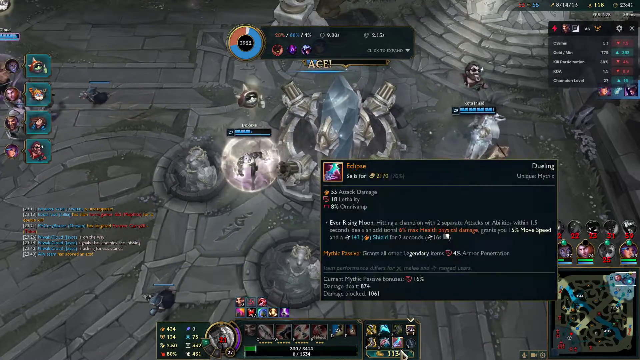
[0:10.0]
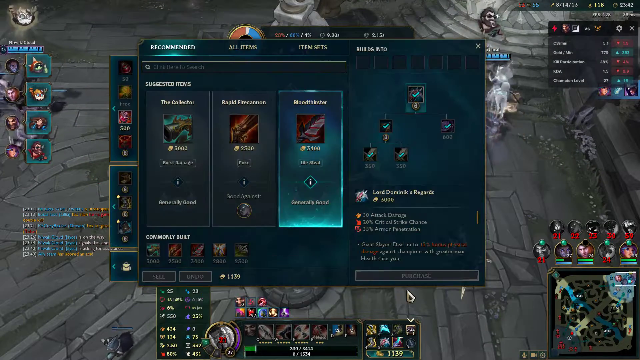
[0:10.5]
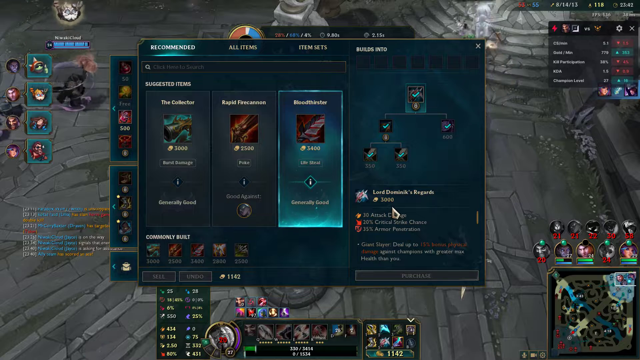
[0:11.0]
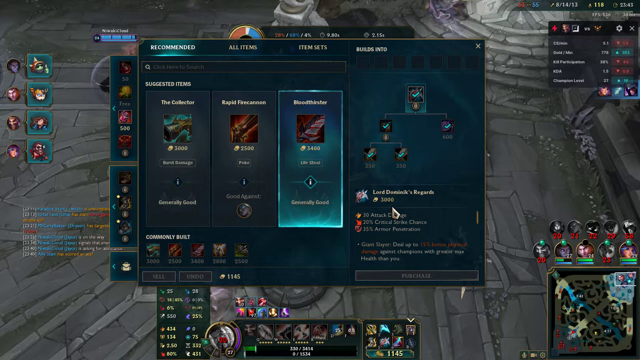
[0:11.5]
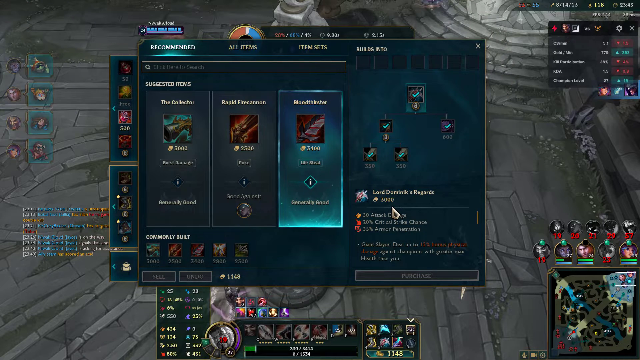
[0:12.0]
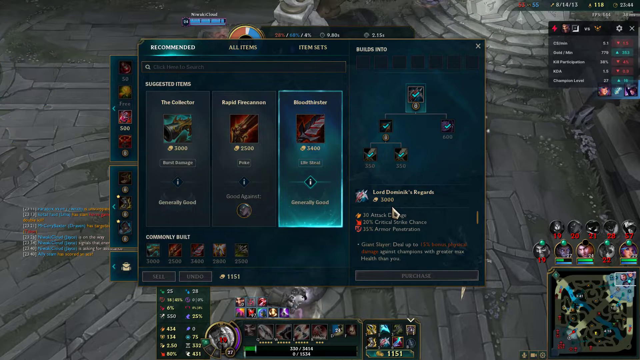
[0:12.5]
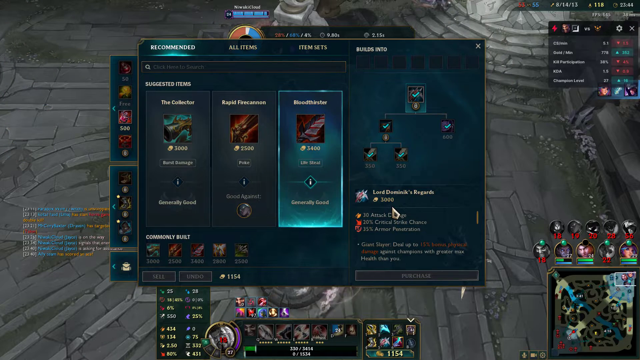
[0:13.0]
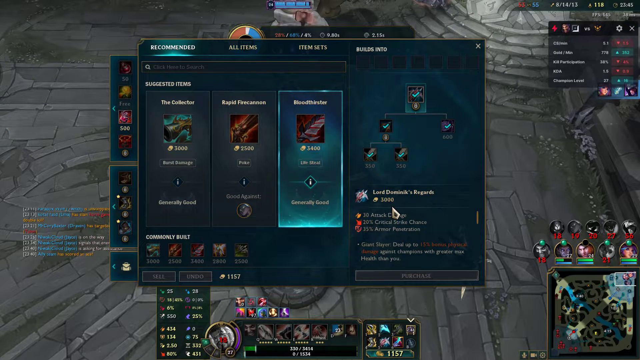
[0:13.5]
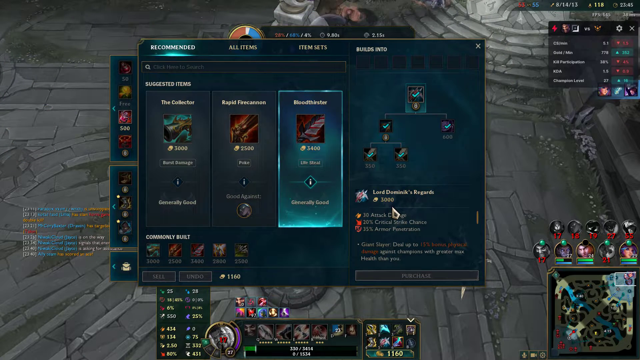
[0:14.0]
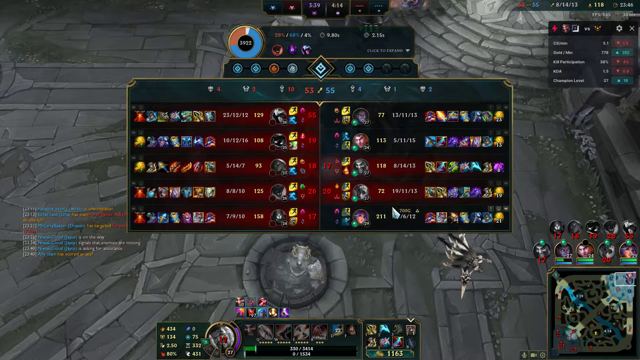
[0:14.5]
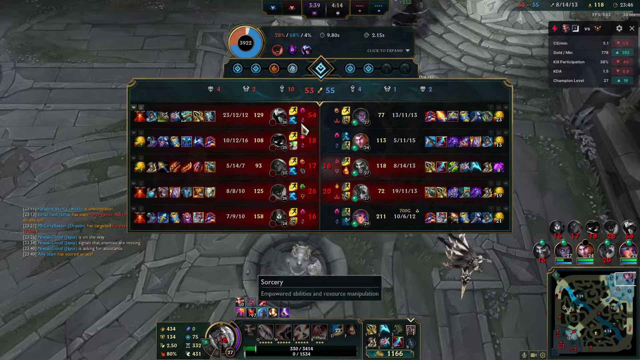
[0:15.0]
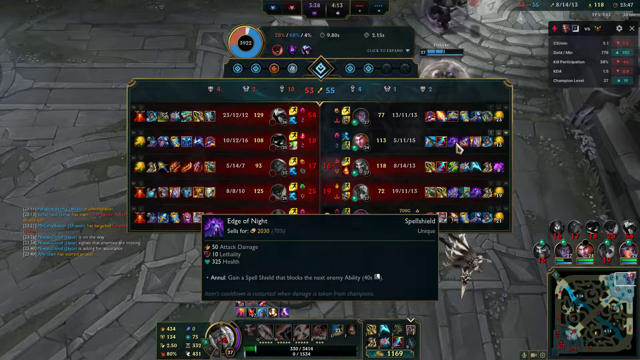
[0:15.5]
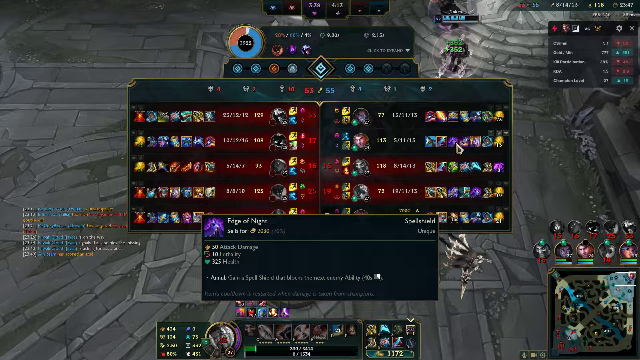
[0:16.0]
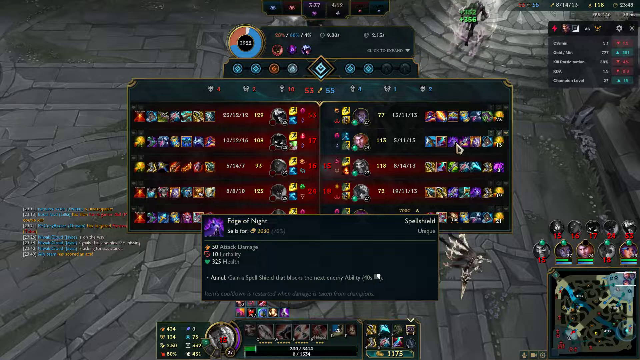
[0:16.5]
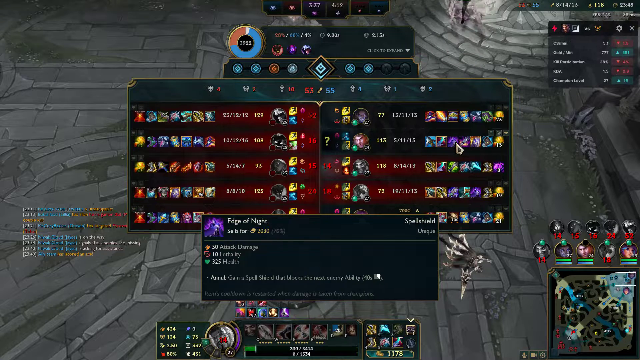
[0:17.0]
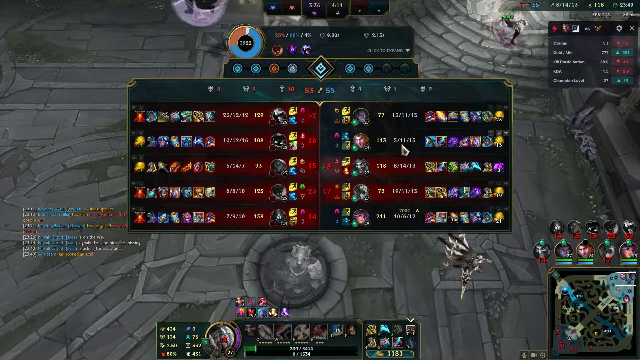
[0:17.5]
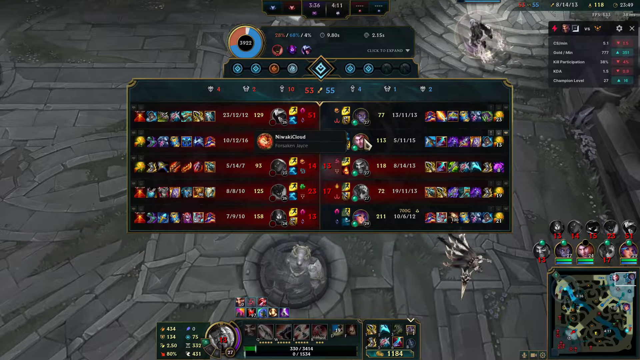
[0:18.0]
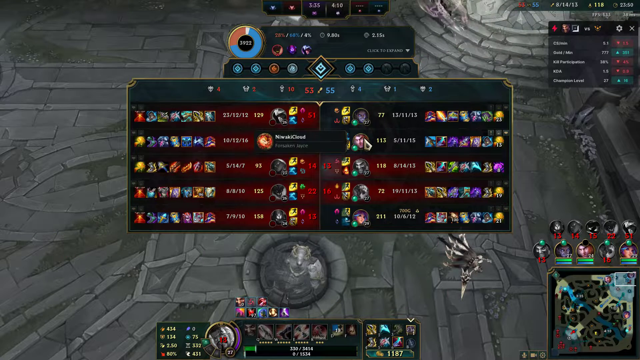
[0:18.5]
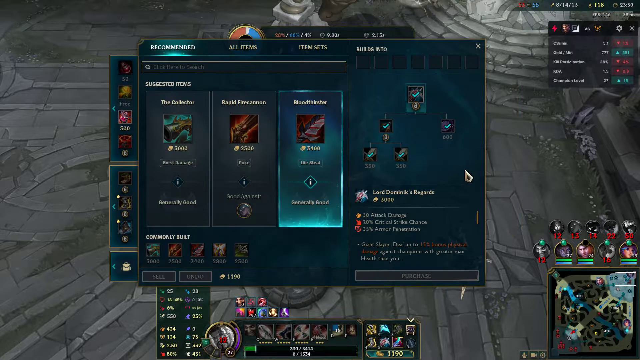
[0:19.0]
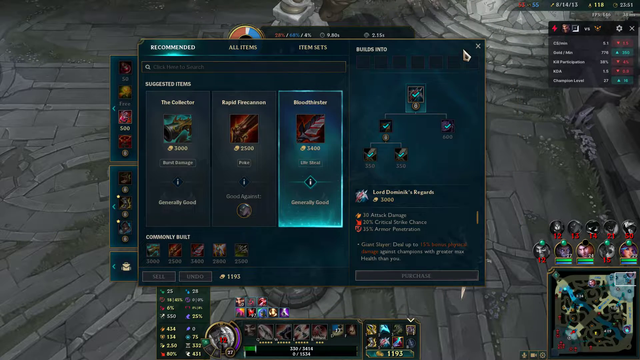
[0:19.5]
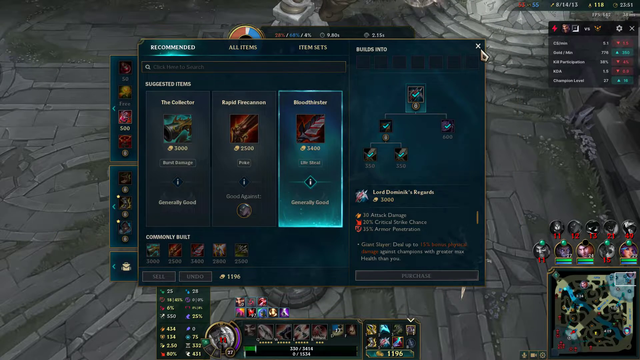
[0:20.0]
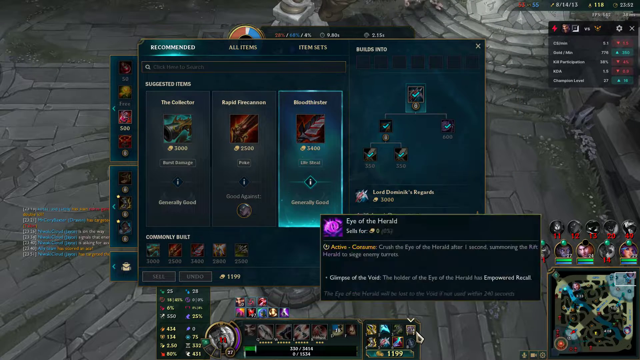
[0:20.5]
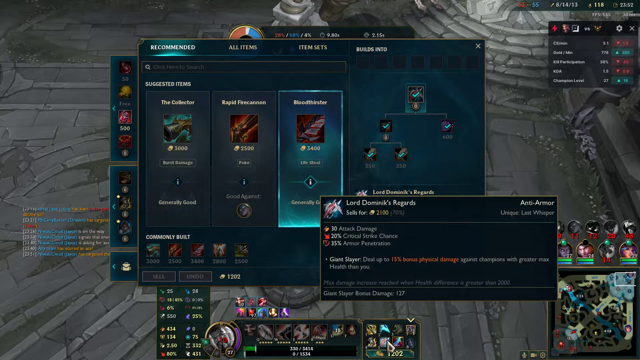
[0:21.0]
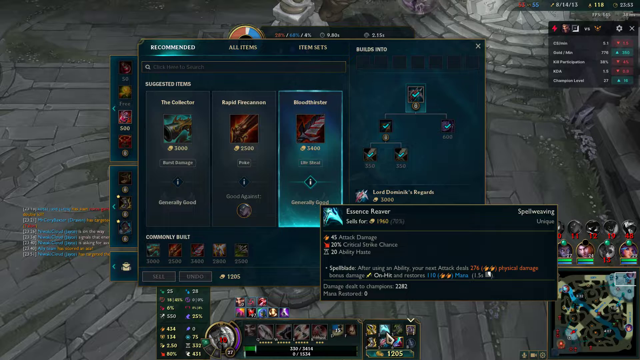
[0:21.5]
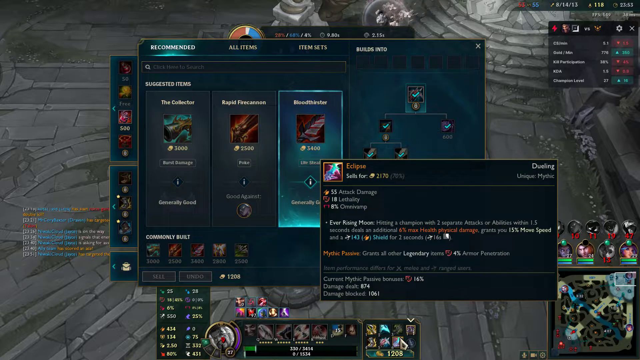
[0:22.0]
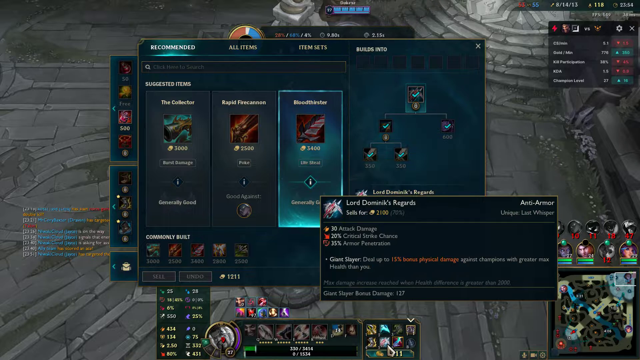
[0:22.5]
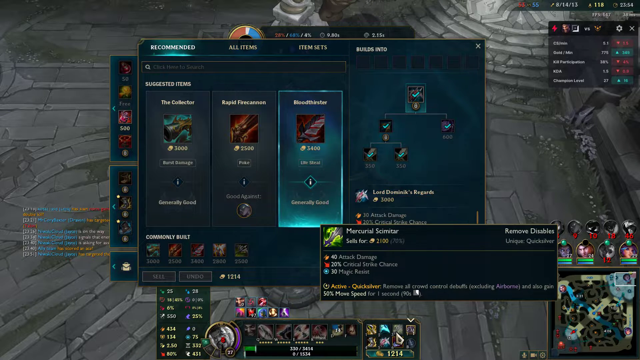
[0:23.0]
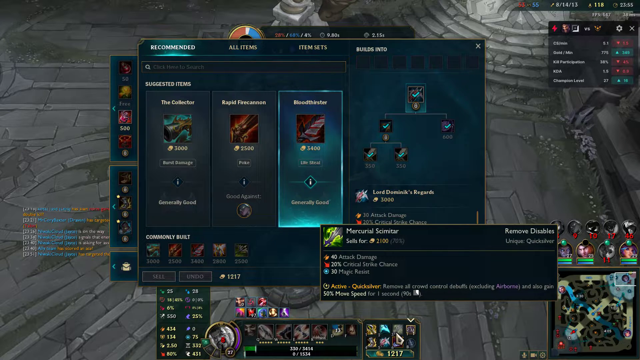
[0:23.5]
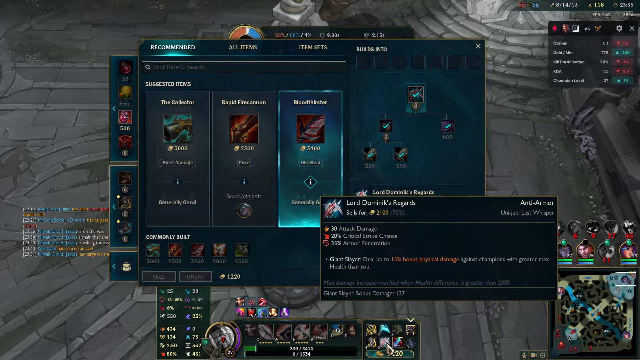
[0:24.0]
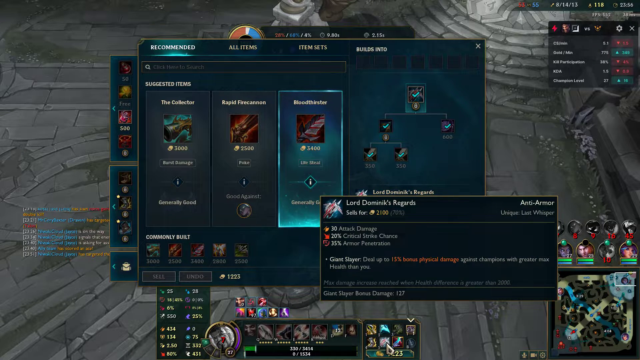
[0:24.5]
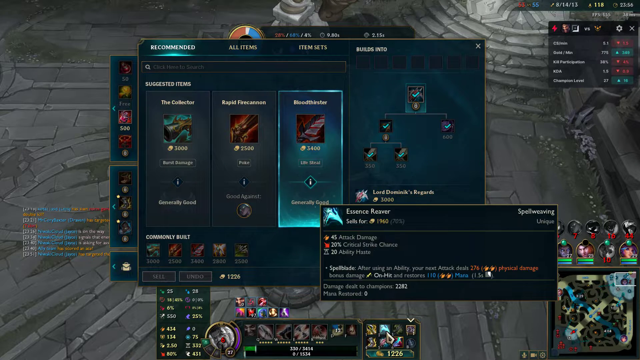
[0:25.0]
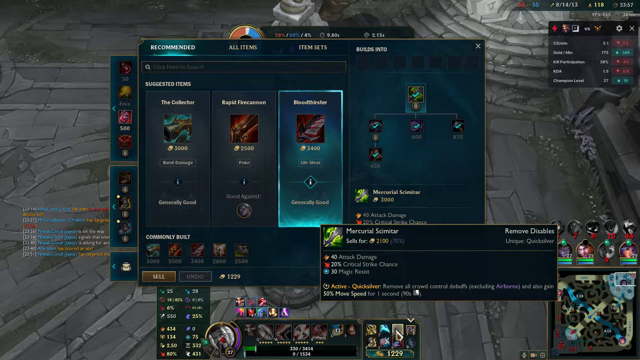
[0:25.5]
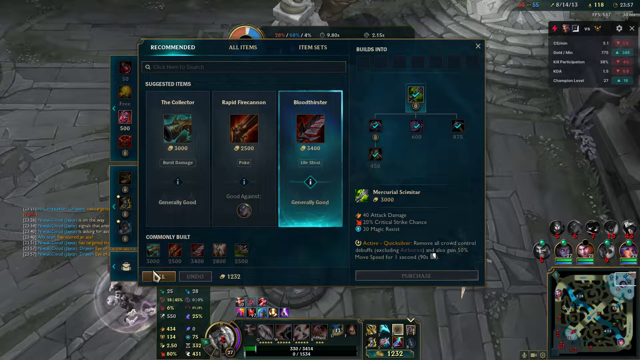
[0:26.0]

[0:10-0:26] The gameplay shows a lot of kind of gray scenery with some white circular bubbles of characters in it. Health bars are on the screen, there are settings on the left of some characters, and a chat section is on the right. At the bottom there is a mini-map with some other characters above it, and a set of gameplay metrics is in the top right corner. Information for Eclipse and what it sells for is visible. There is a bit of running around, and then settings appear on the screen reading "recommended", "all items" and "item sets". A section called "suggested items" includes one item called "bloodthirster", which is currently clicked on. Other settings show a number of different icons that pop up boxes when hovered over. The player goes to exit the recommended section but stays on the screen, hovers over some other items, and then clicks the sell button.